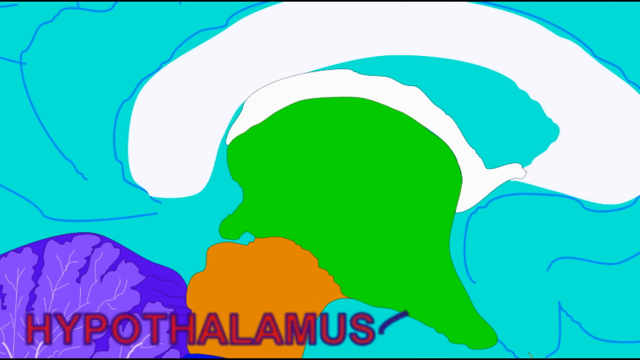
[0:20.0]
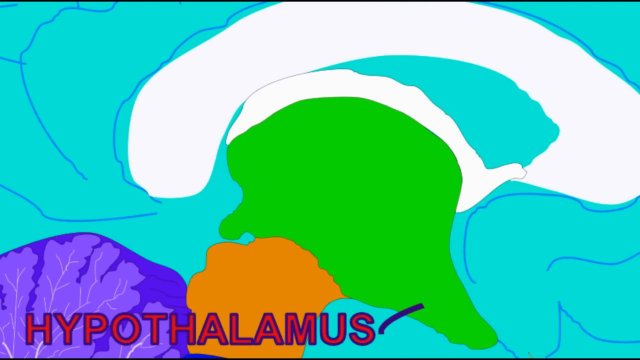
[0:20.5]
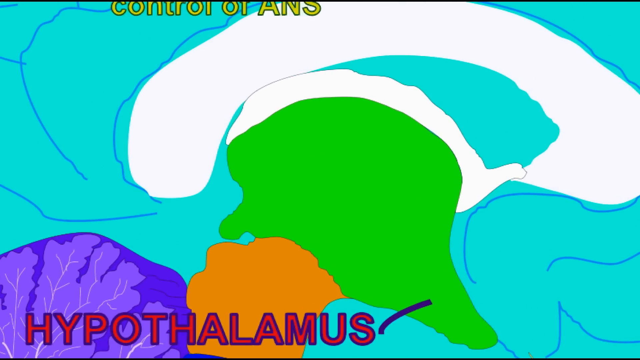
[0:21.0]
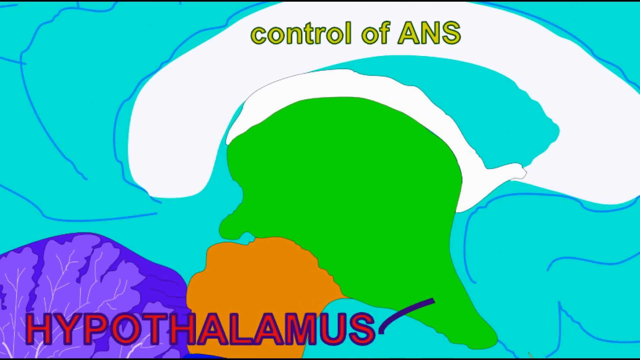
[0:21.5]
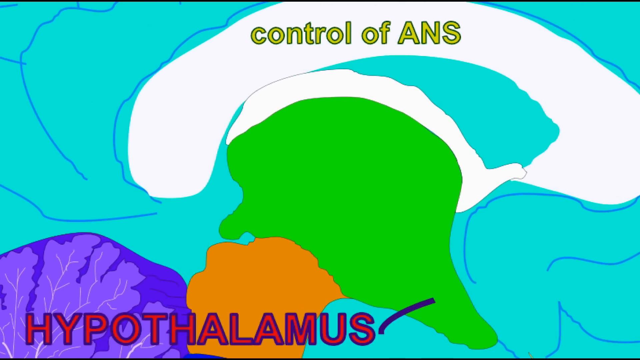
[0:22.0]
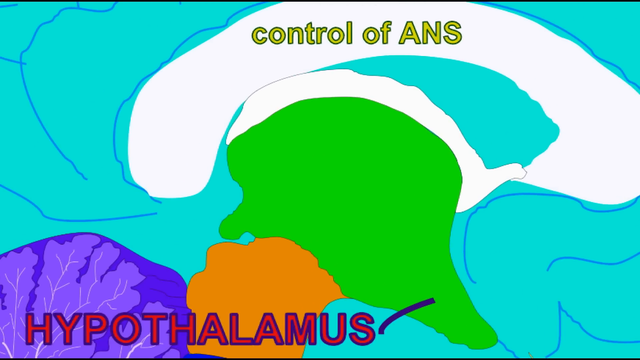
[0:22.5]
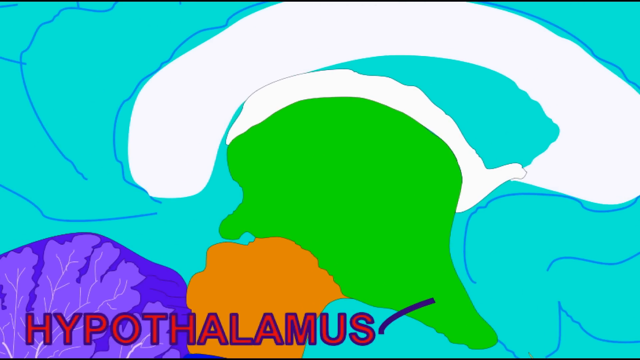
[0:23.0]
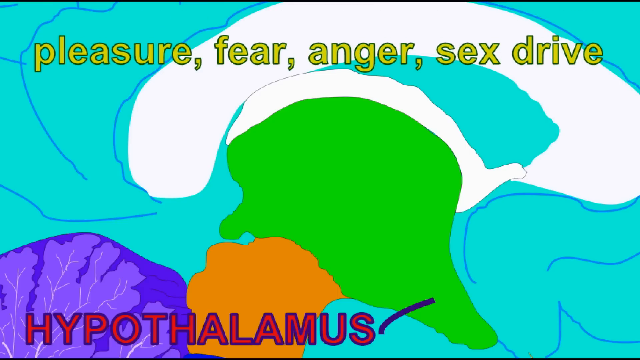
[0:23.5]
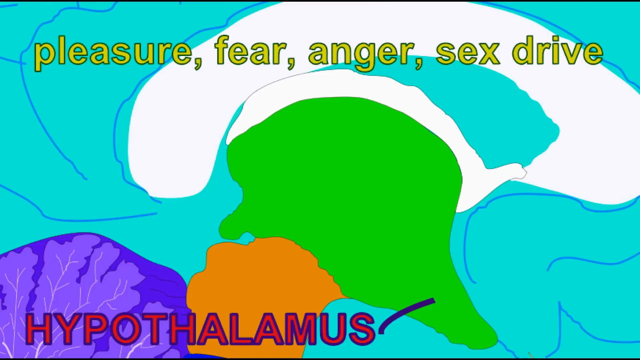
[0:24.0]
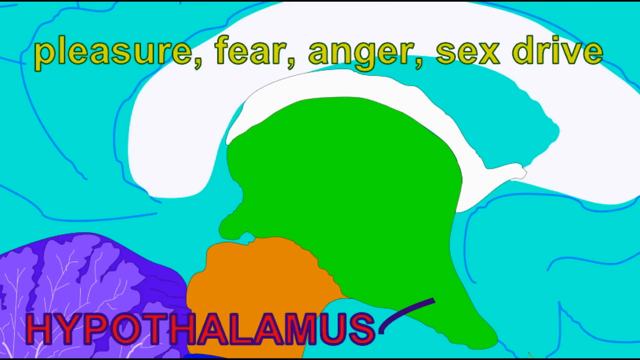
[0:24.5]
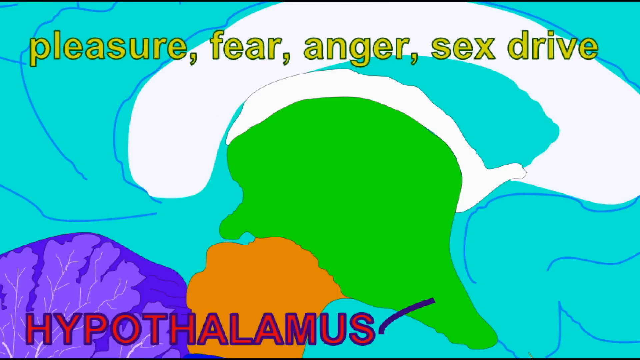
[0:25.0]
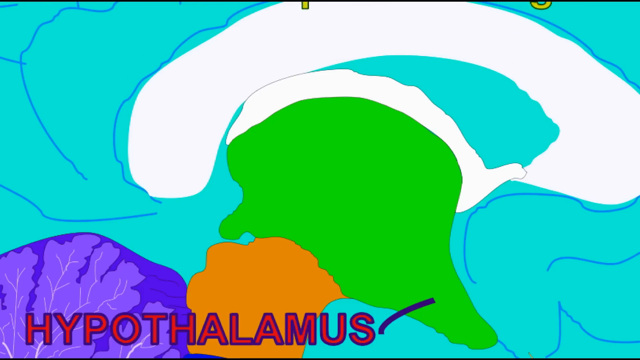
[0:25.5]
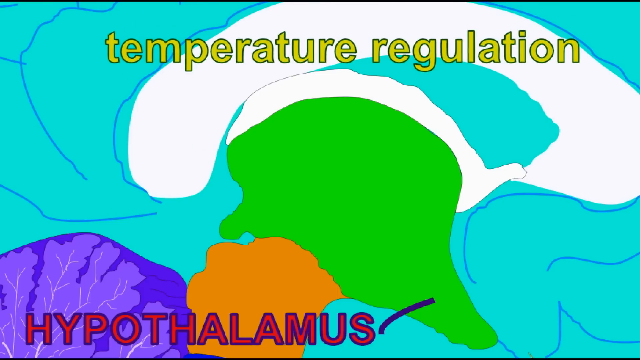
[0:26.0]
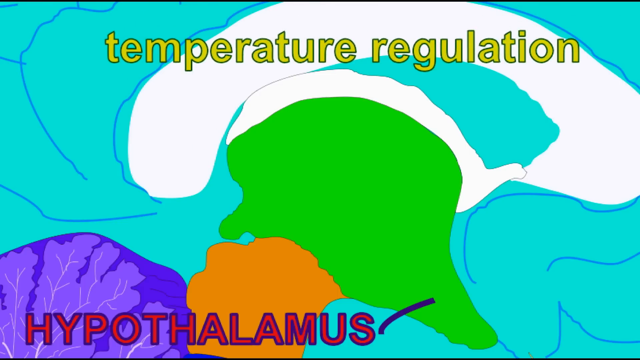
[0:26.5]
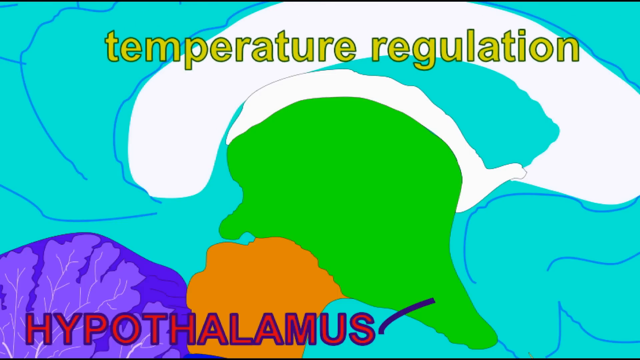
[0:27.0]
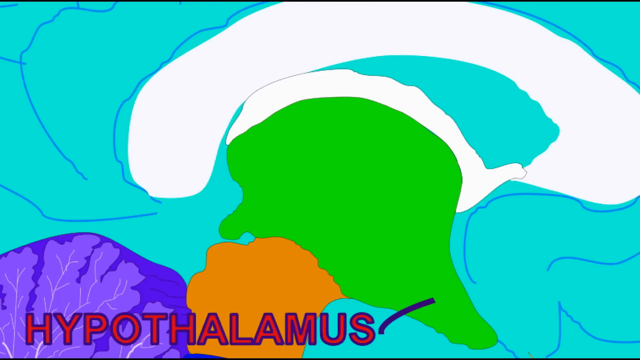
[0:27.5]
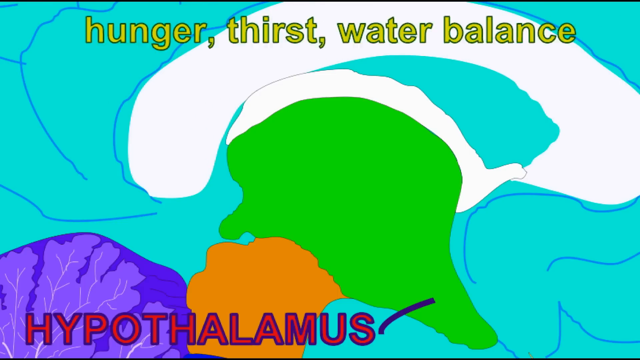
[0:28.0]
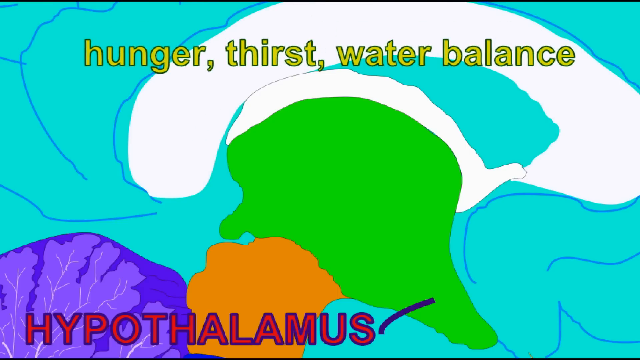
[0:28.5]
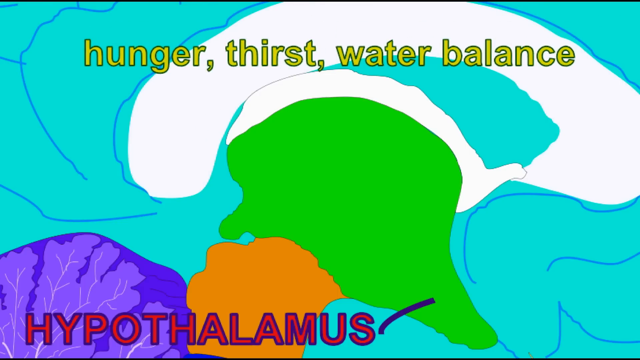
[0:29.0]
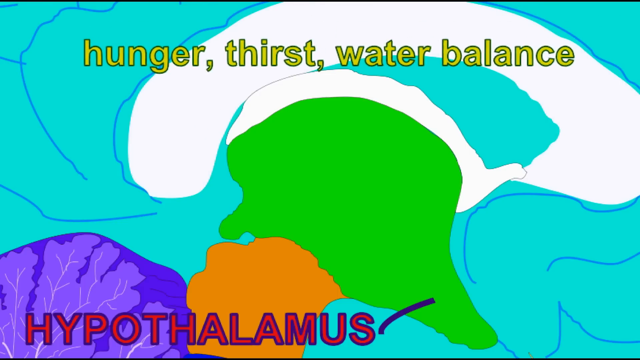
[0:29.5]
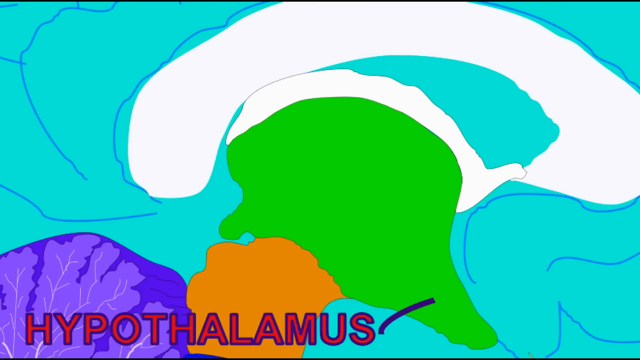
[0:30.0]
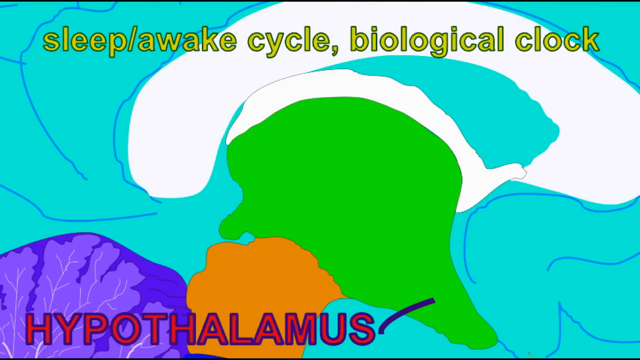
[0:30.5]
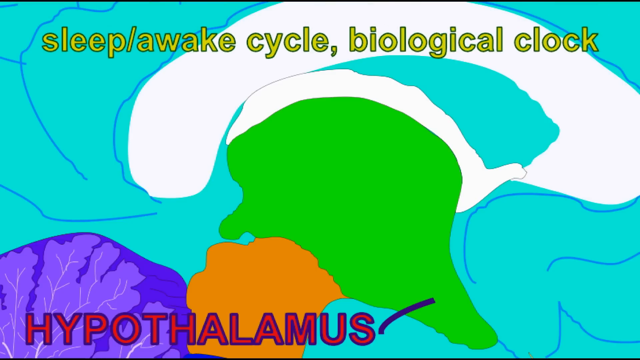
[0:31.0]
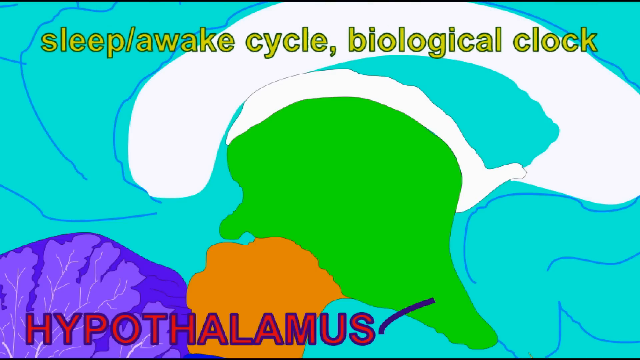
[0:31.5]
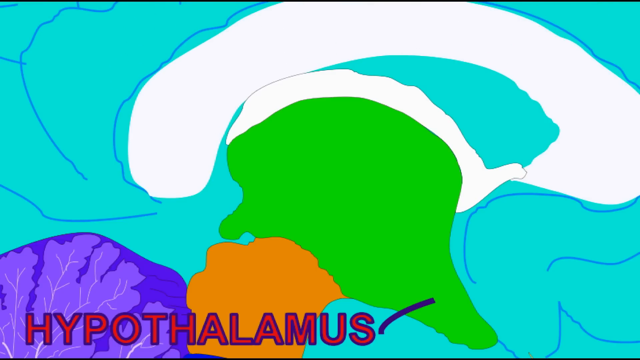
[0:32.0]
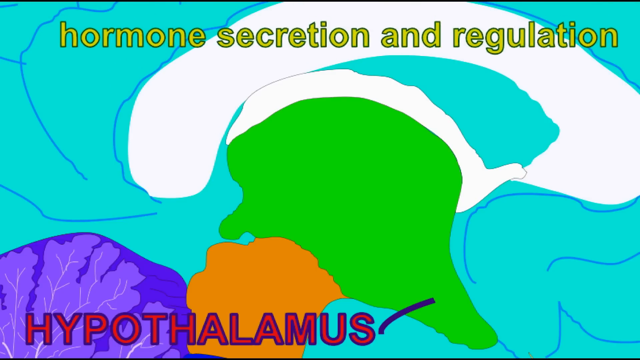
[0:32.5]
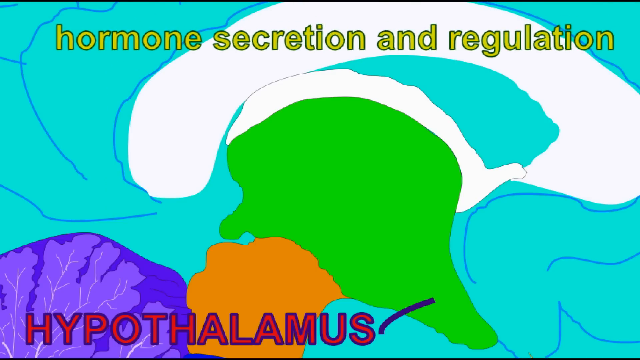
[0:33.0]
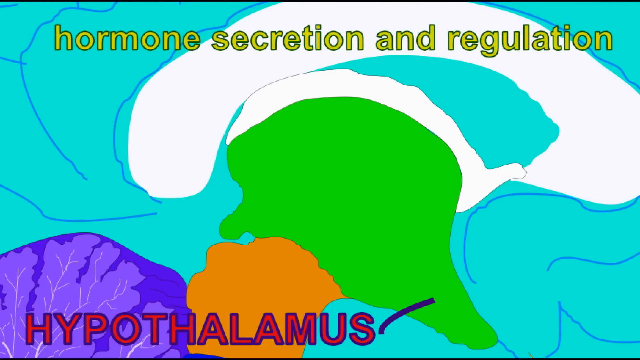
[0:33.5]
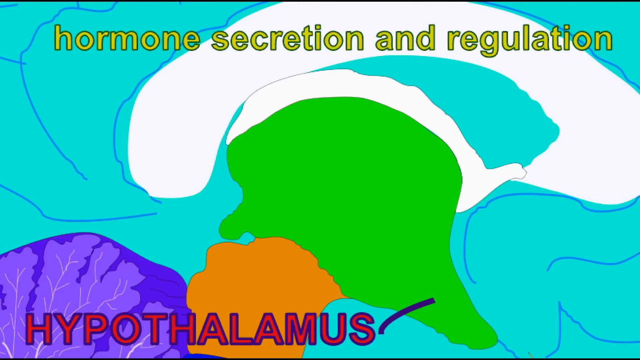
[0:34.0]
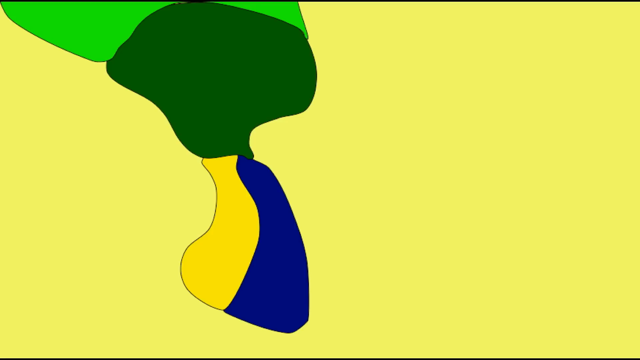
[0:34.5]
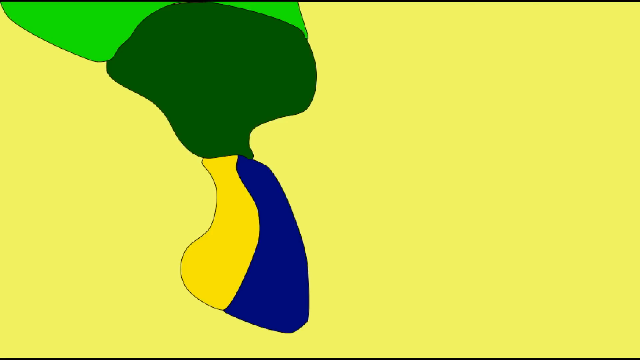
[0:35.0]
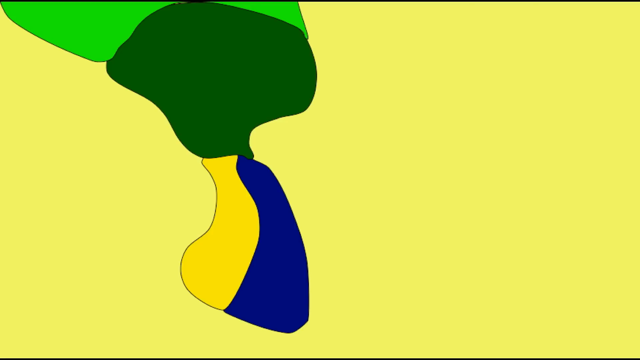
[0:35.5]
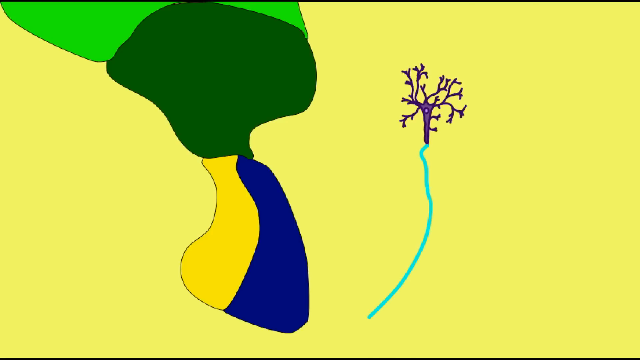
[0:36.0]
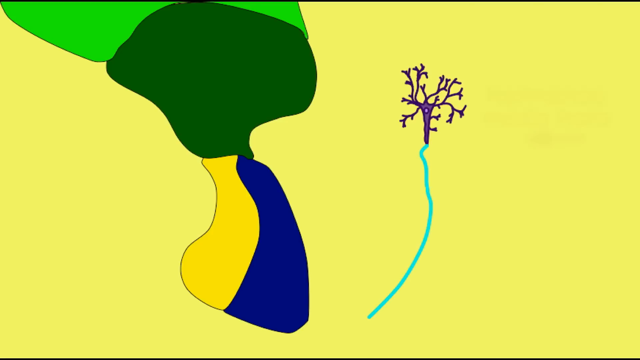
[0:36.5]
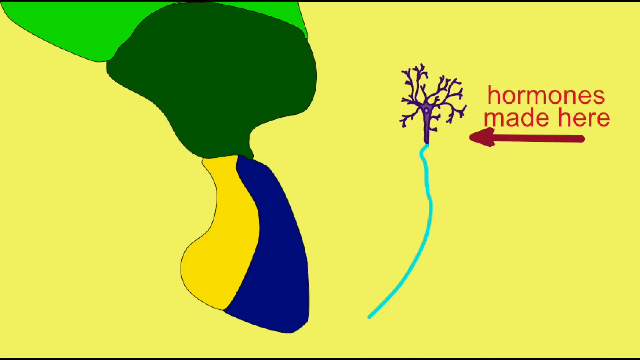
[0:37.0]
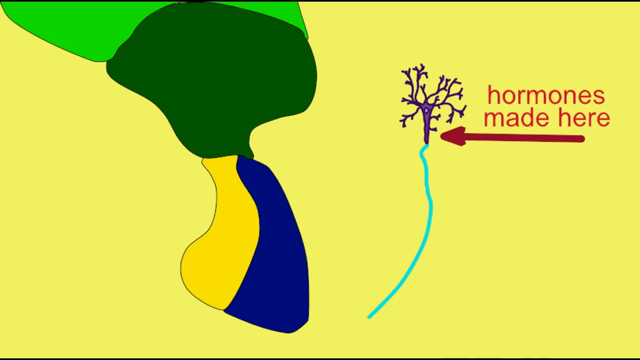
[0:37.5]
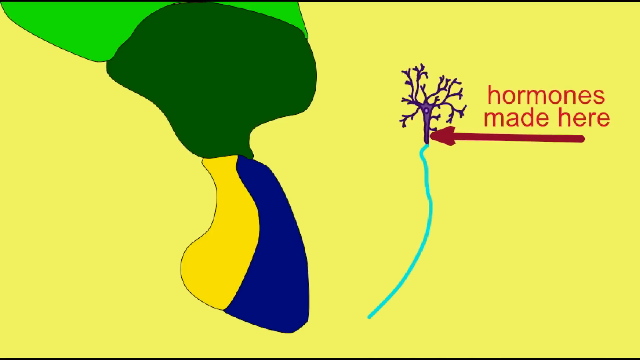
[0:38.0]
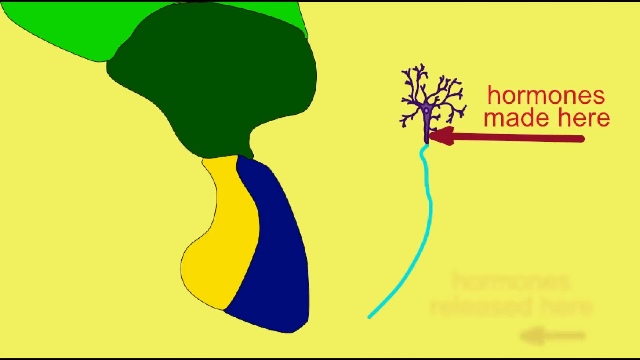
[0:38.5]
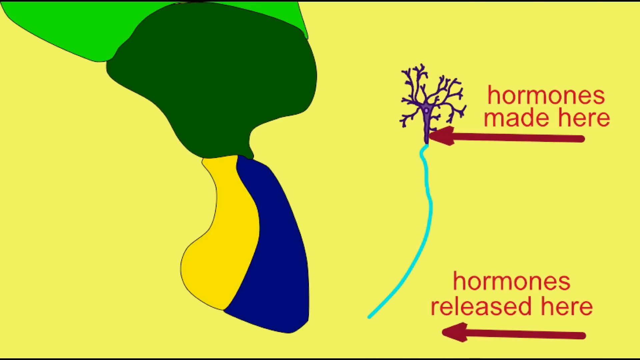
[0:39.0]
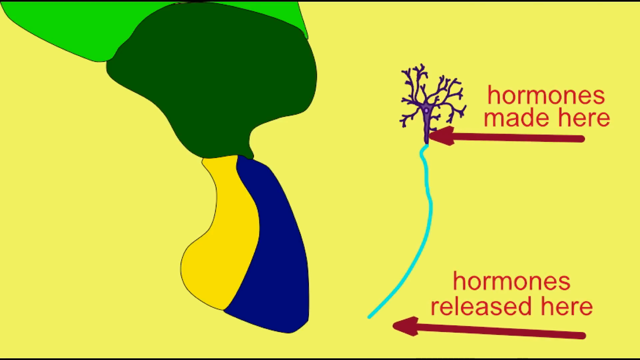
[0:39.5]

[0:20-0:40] A close-up of the brain fills the screen. The brain is light blue against a purple background, with light inside it along with bright green and orange. The shot stays on the brain for a while. A graphic then appears that says "control of ANS." It reads "pleasure, fear, anger, and sex drive," written in green, then "temperature regulation," also in green. "Hunger, thirst, water, balance" and "sleep, awake, cycle, biological clock" are written as well, along with text ending "secretion and regulation." Next comes an object on a yellow background, colored purple, dark yellow, dark green and another green. A blue line runs from this object to a purple object that looks like a tree with no leaves. Text says "hormones are made here," and the graphic shows where hormones are released at the bottom of the object.